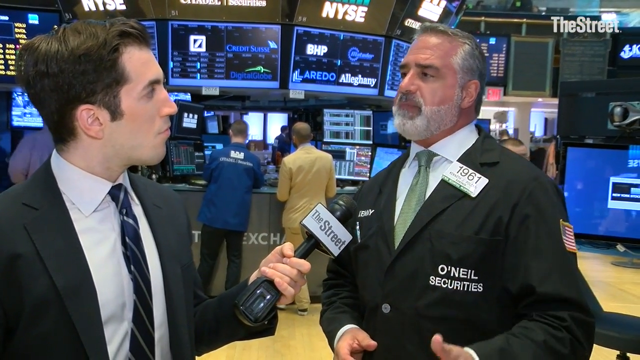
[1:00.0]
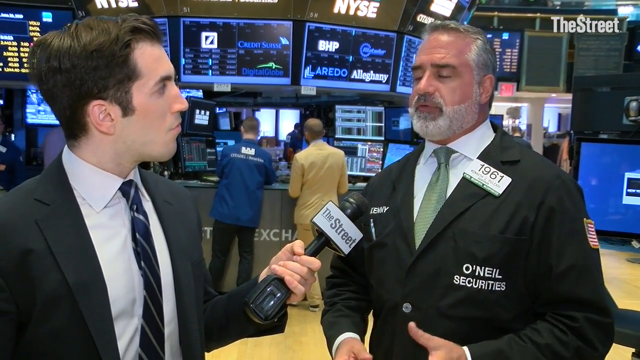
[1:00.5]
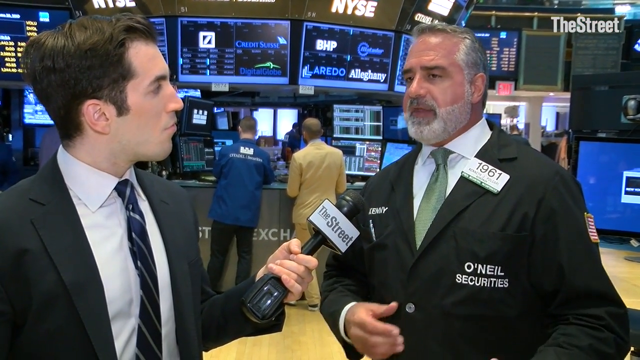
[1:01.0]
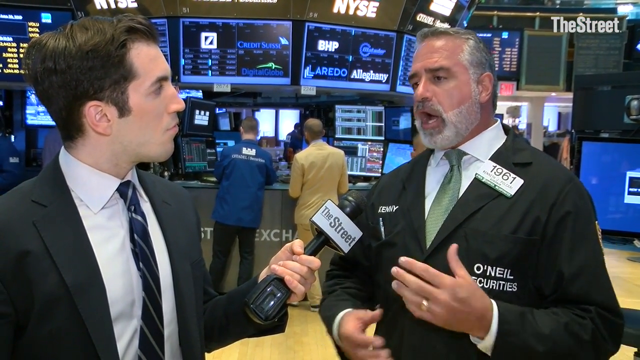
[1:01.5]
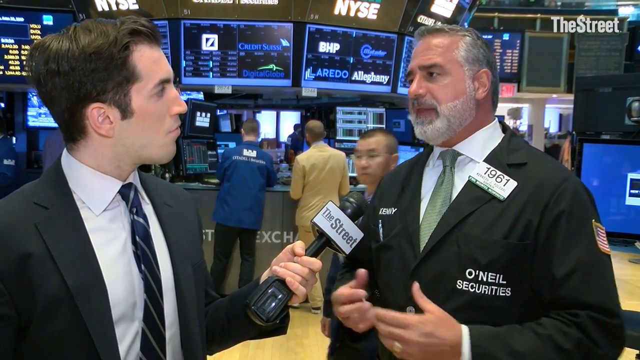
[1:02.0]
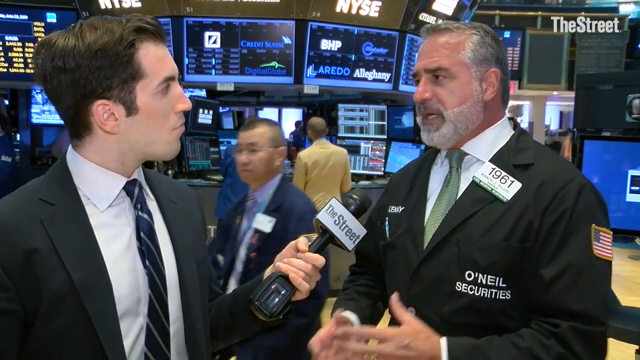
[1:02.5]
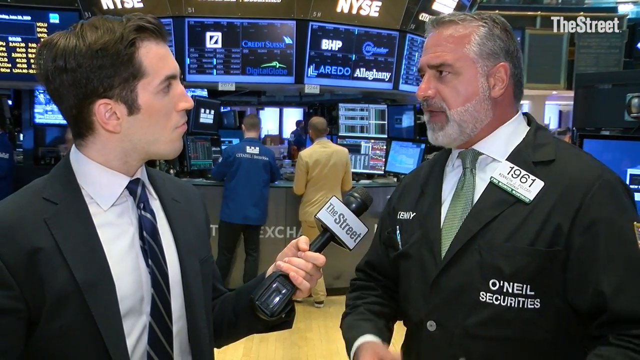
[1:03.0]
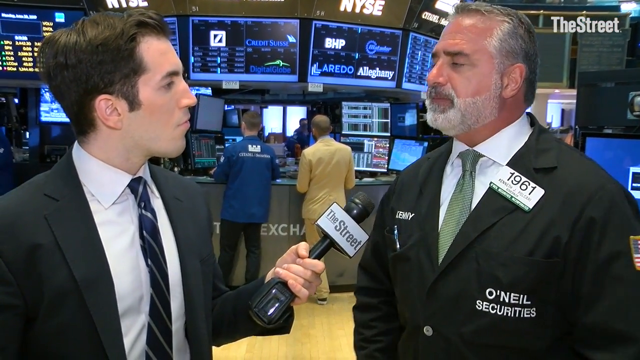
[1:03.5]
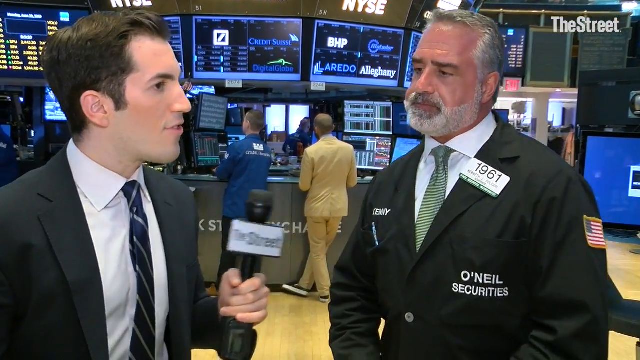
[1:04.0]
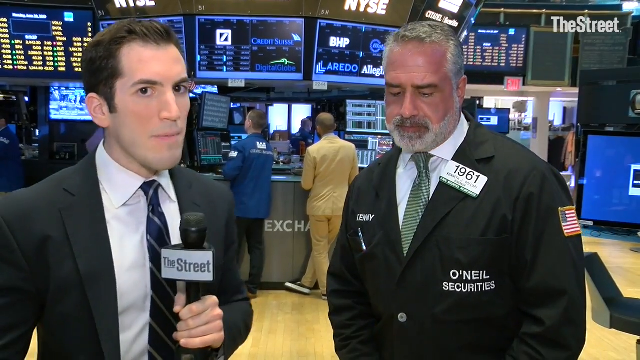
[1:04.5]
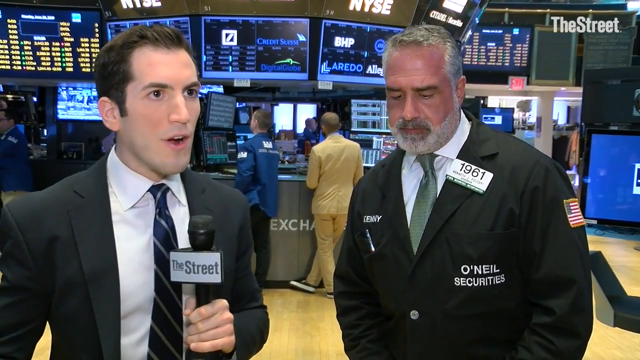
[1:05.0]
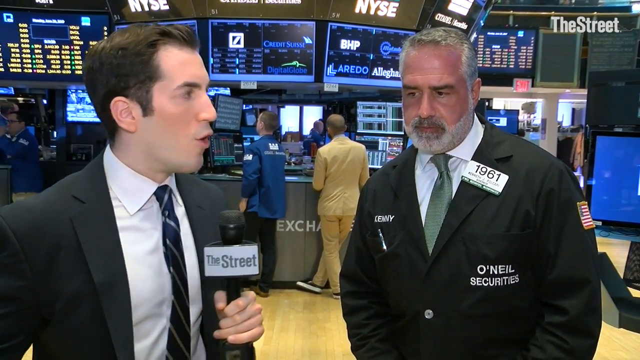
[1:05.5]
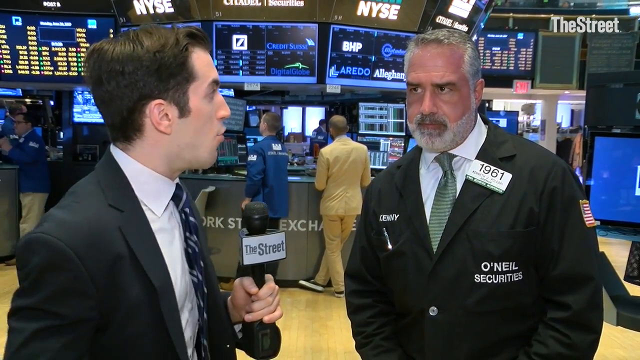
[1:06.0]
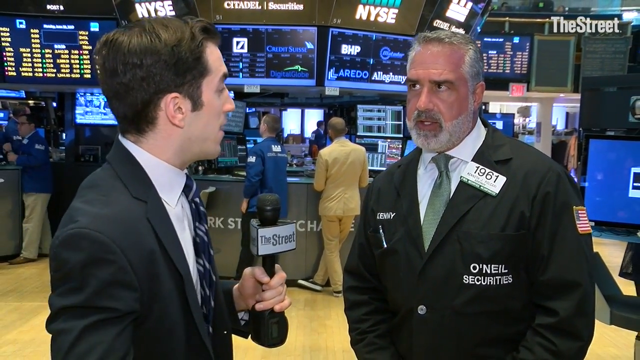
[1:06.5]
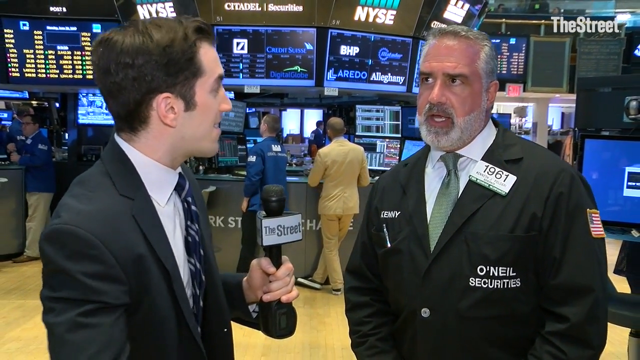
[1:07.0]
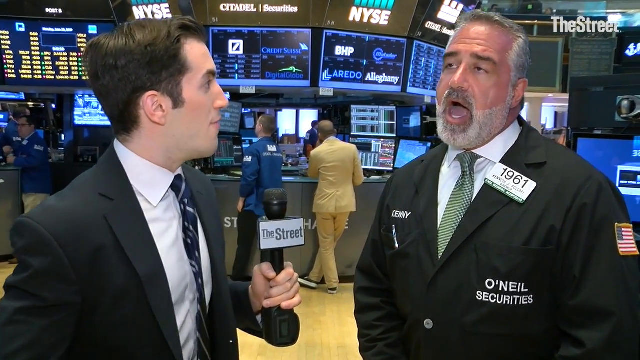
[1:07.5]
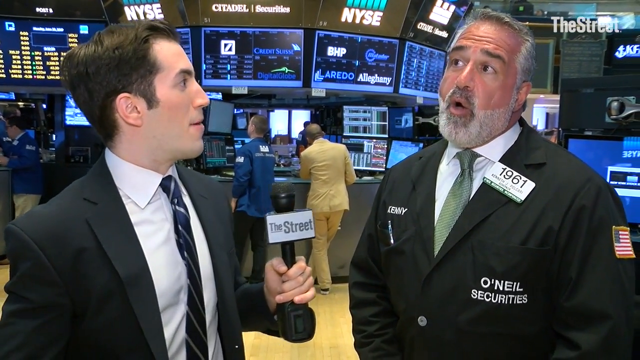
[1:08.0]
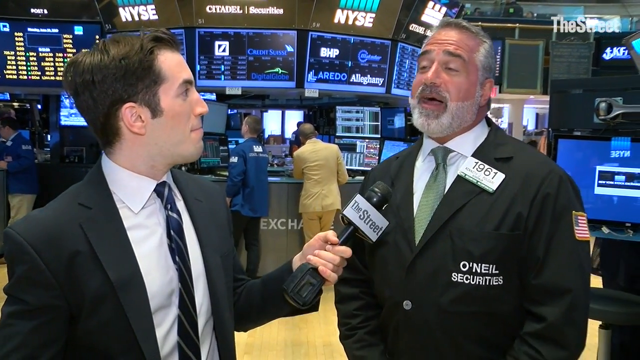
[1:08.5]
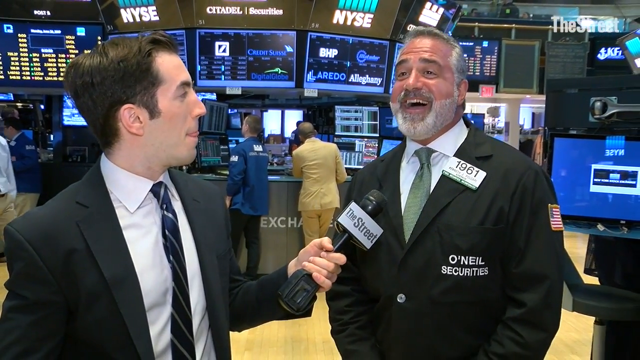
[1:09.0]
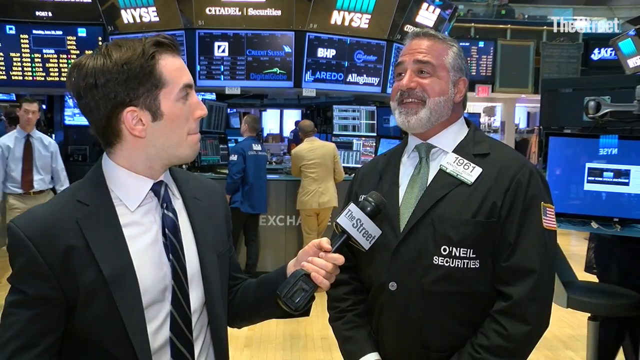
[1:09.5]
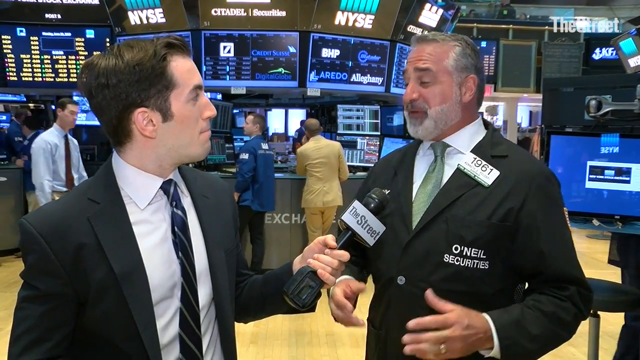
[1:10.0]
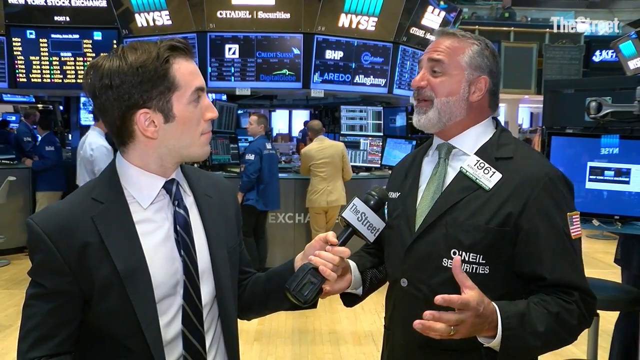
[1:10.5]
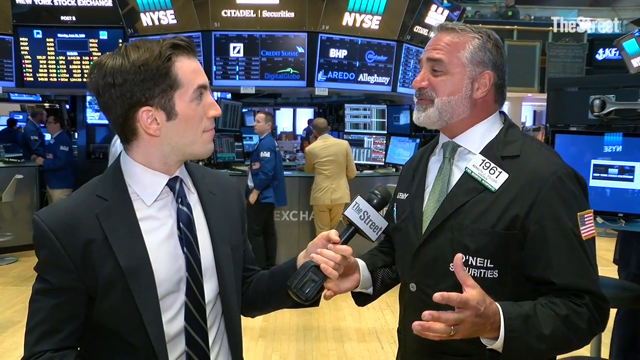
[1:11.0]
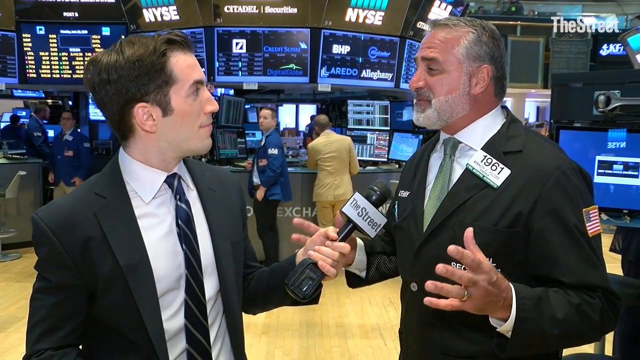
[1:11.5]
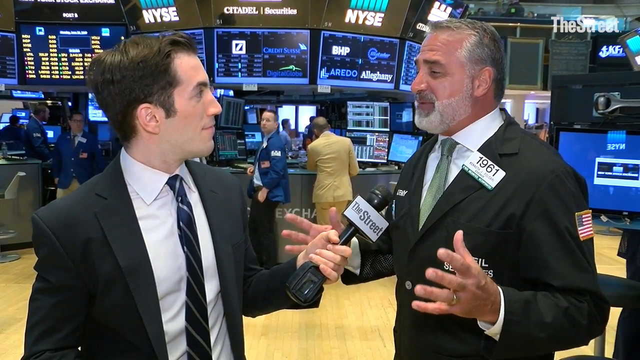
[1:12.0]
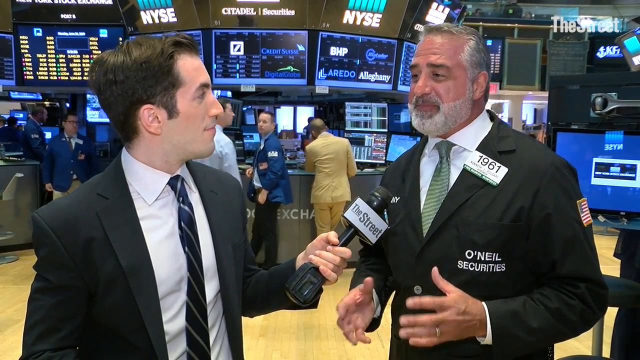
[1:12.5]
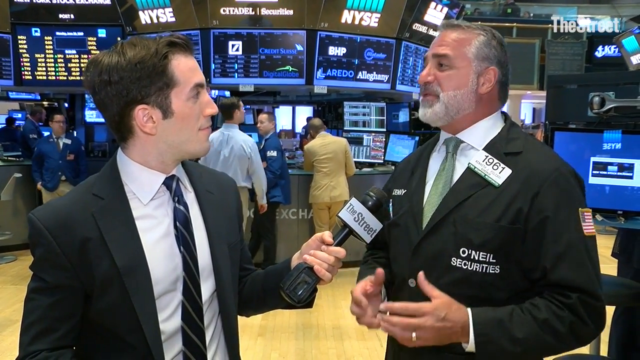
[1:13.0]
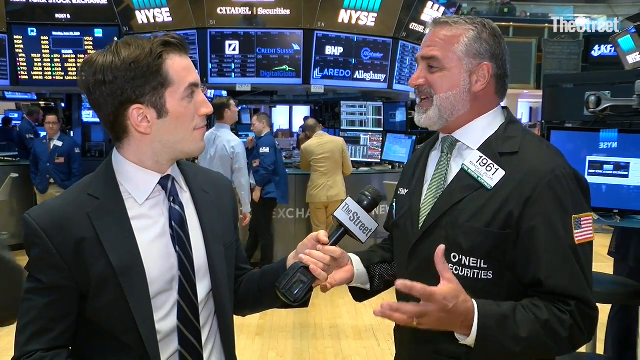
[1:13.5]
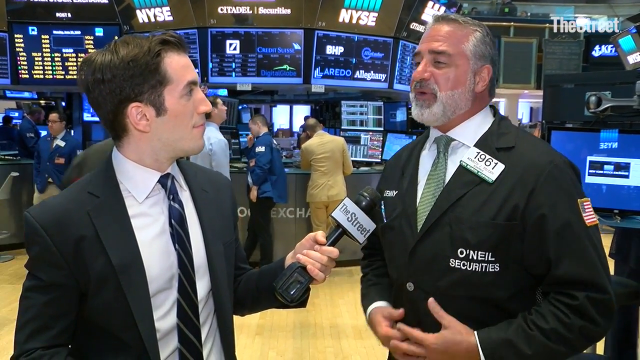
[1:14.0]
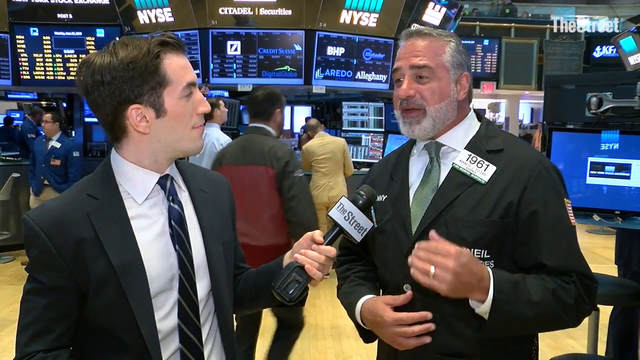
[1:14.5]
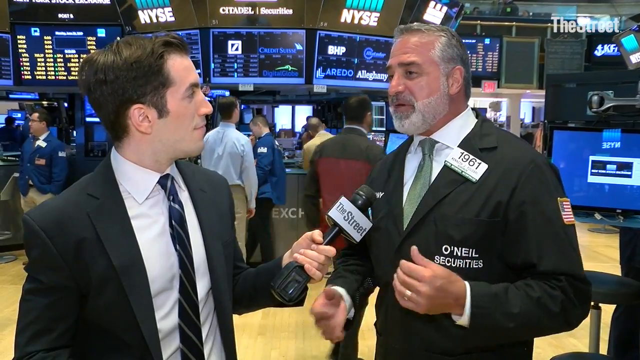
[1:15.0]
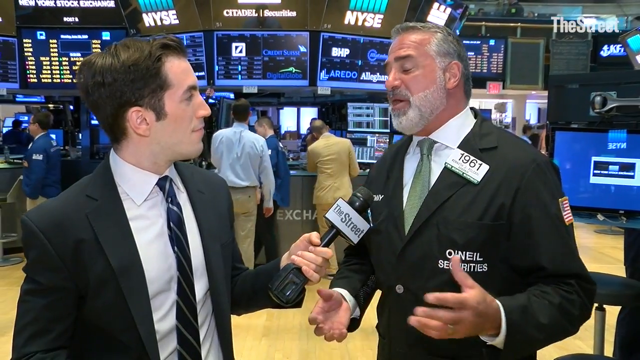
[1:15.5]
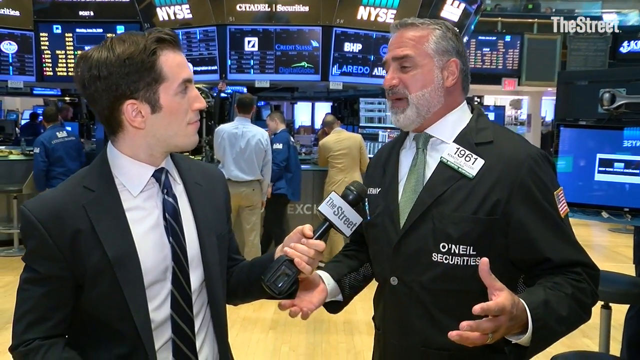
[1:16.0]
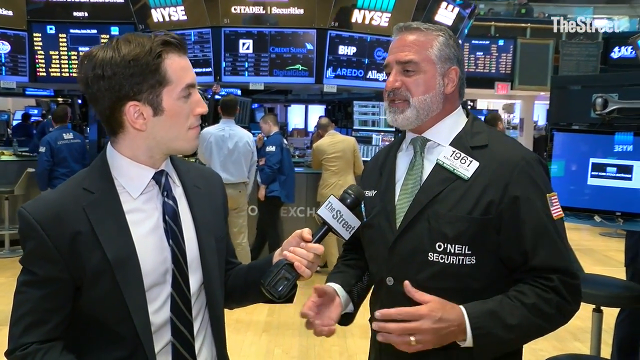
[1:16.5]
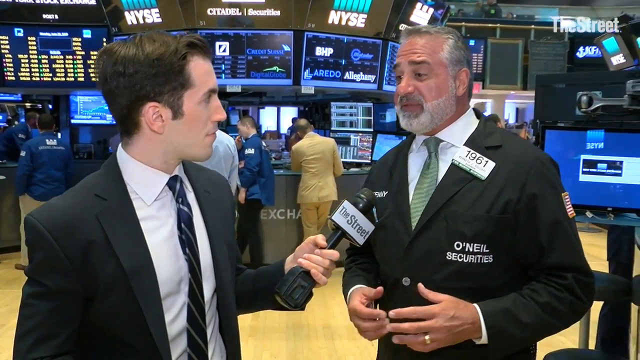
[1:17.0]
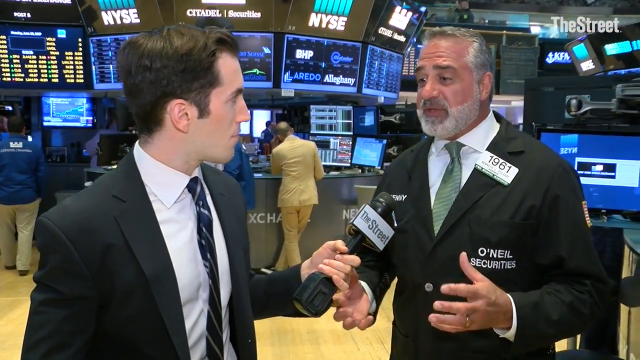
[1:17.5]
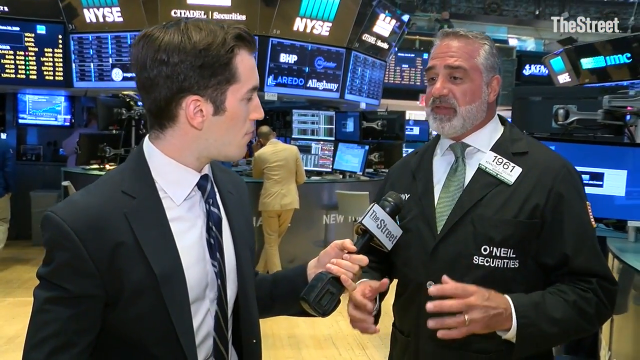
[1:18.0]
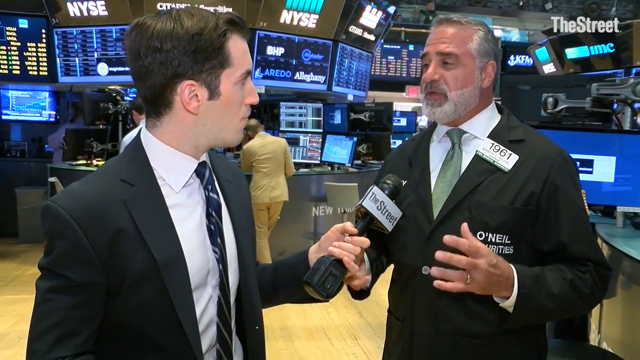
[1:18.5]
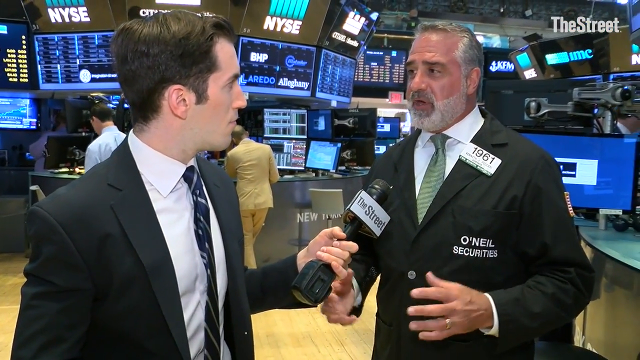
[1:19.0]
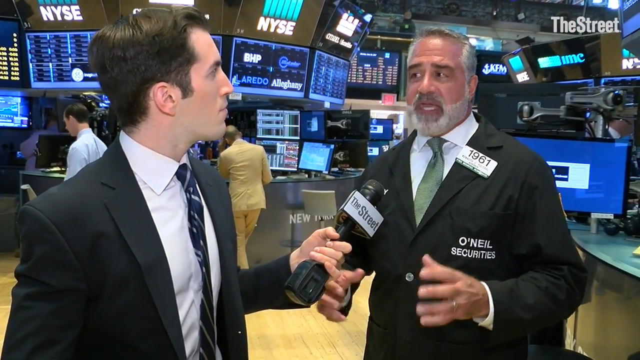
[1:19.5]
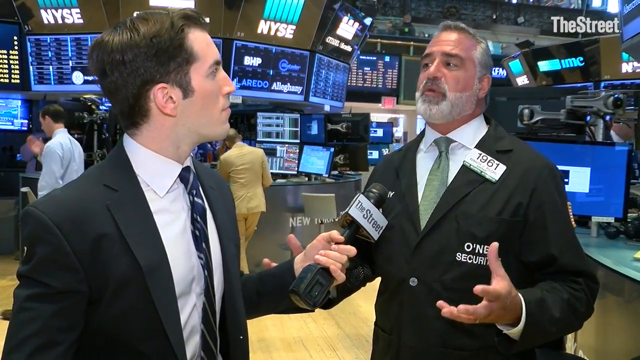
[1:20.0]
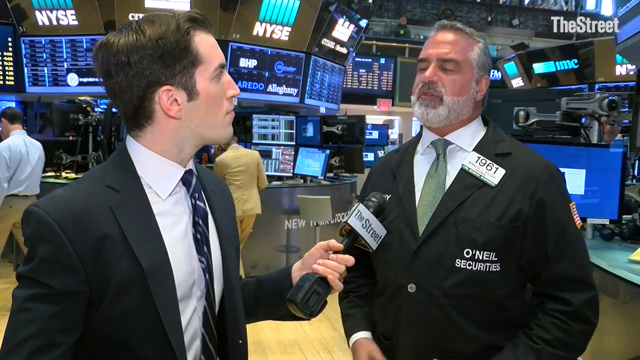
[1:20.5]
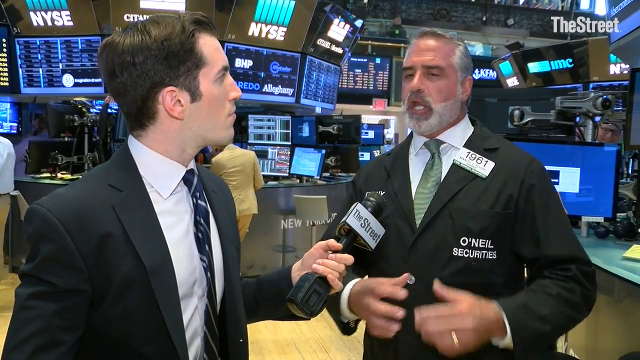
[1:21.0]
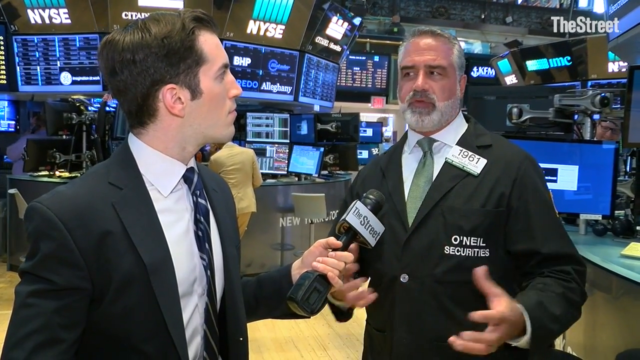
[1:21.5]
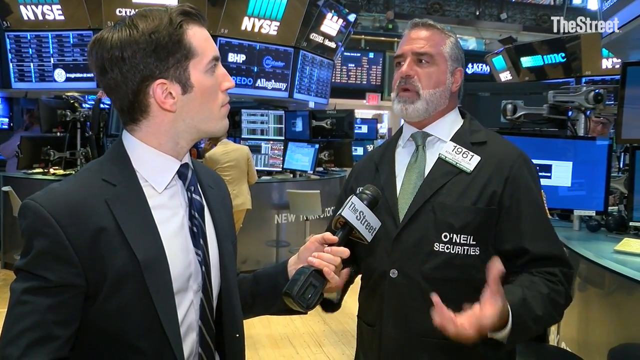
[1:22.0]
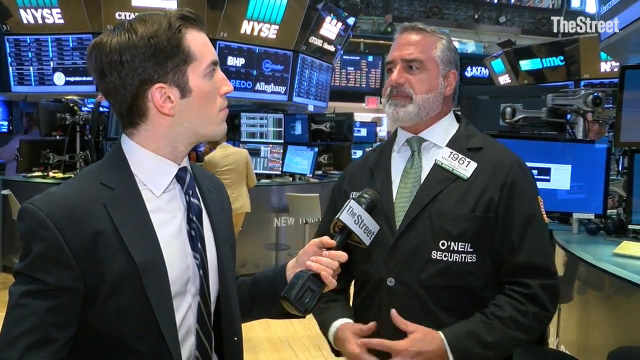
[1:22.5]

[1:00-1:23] A man continues talking to the reporter from the street about Dan Lube's $3.5 billion stake in Nestle, asking the man who works at the New York Stock Exchange for his opinion. The interviewee is from O'Neill Securities, is named Kennedy, is identified by the number 1961, and has an American flag on the side of his attire. Screens are everywhere, showing charts, numbers in green and blue, and companies. Everyone wears suits, suits and ties, or dress shirts. Some of the people working have branded attire with their company's name on the back. The man is very ecstatic as he answers the reporter's questions.